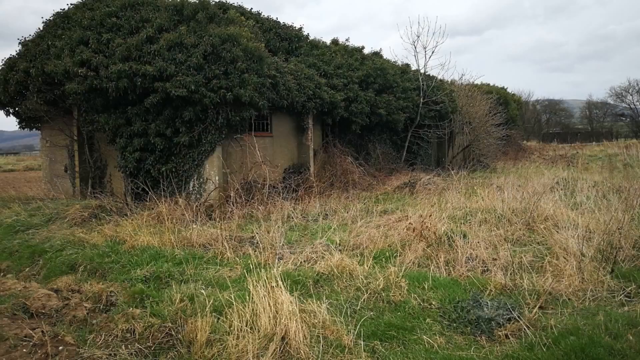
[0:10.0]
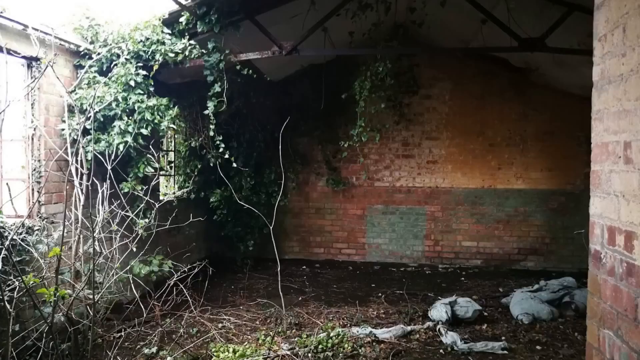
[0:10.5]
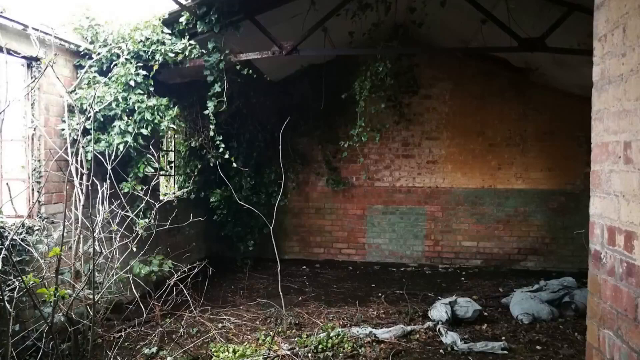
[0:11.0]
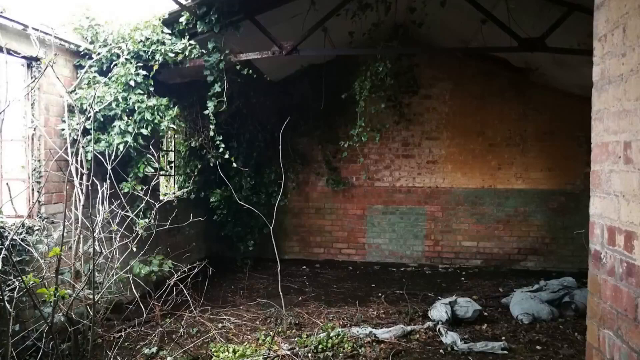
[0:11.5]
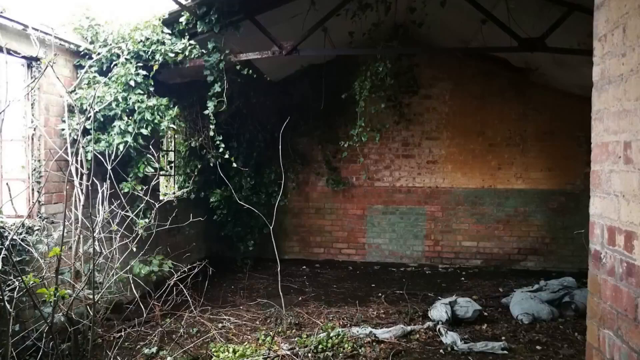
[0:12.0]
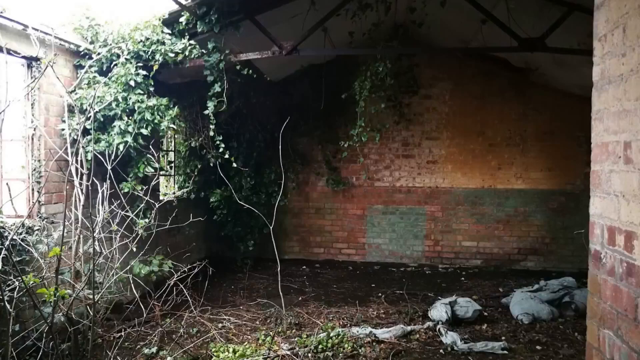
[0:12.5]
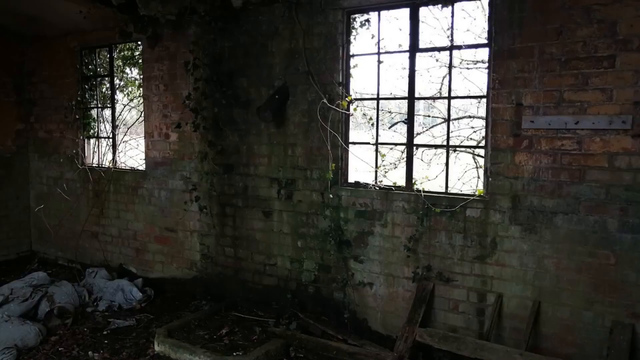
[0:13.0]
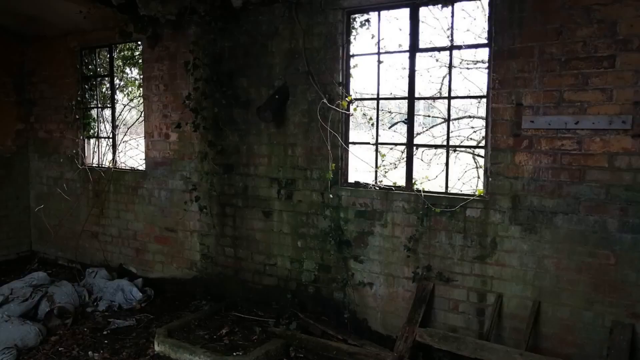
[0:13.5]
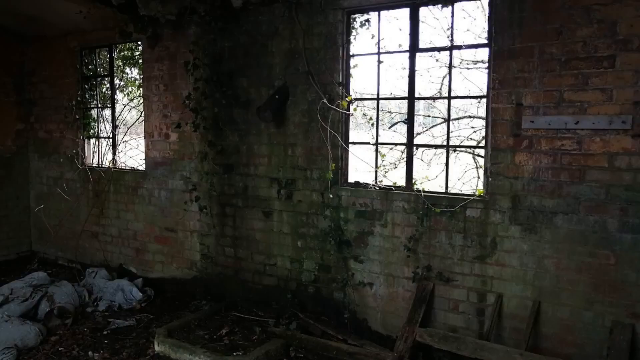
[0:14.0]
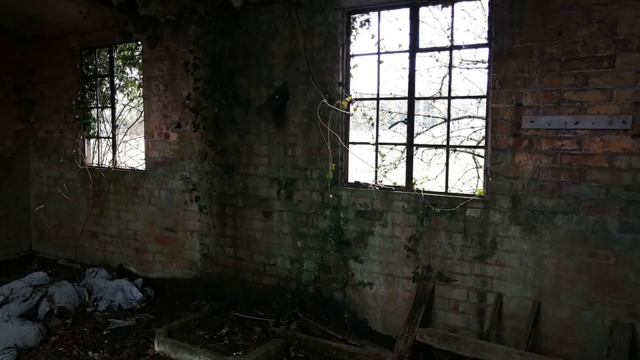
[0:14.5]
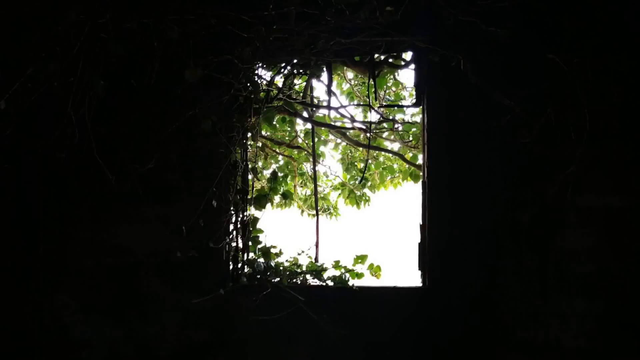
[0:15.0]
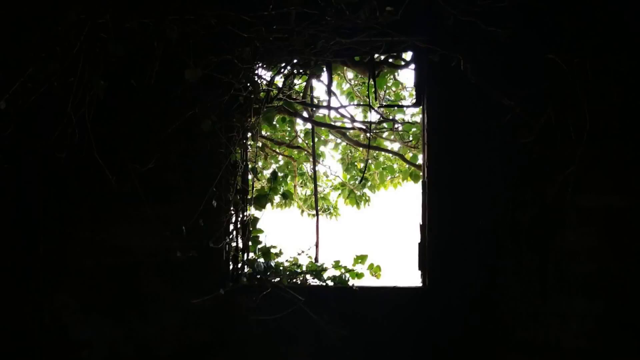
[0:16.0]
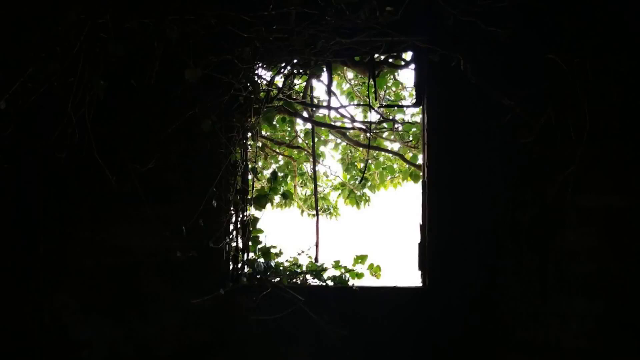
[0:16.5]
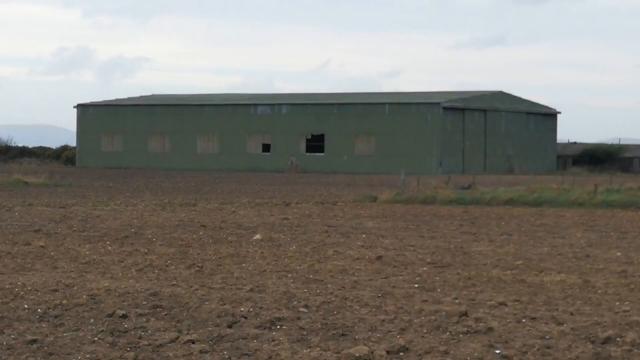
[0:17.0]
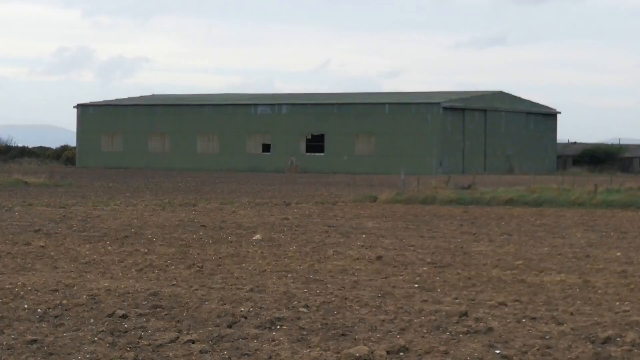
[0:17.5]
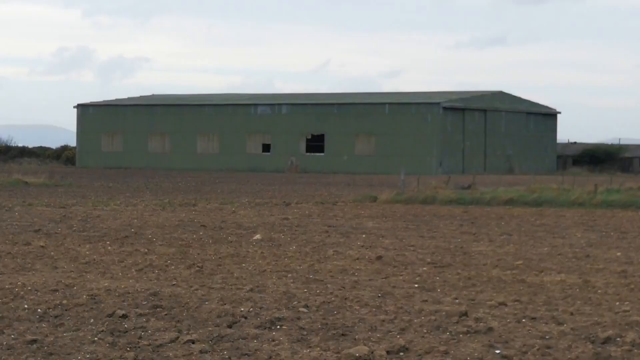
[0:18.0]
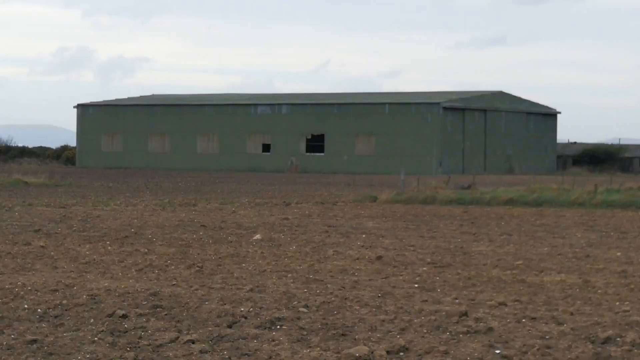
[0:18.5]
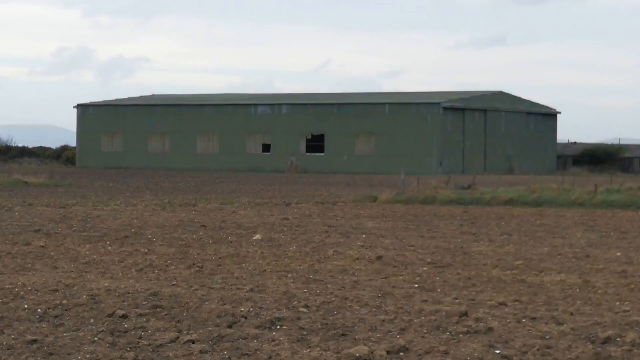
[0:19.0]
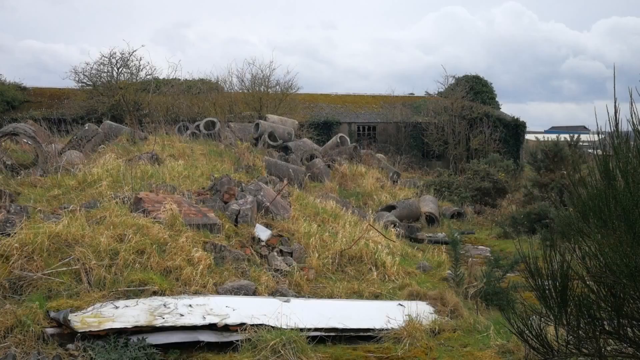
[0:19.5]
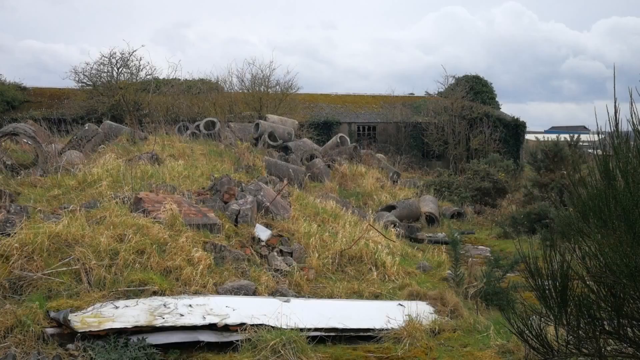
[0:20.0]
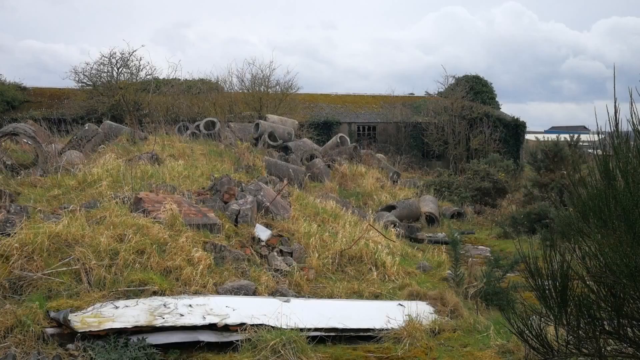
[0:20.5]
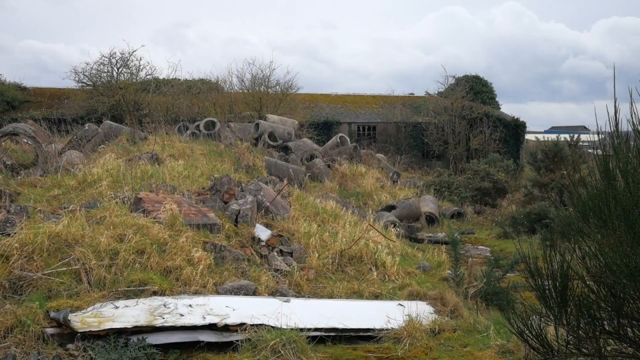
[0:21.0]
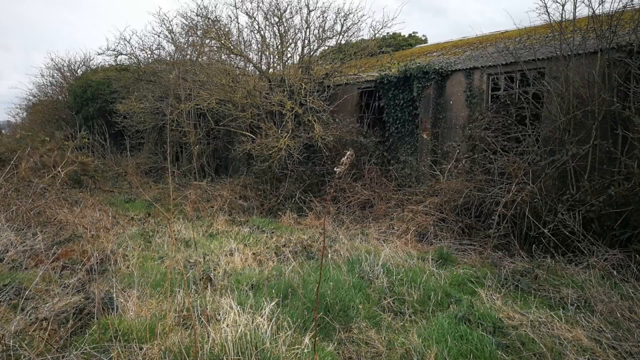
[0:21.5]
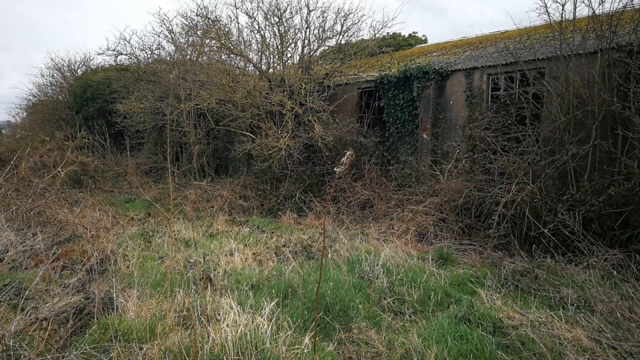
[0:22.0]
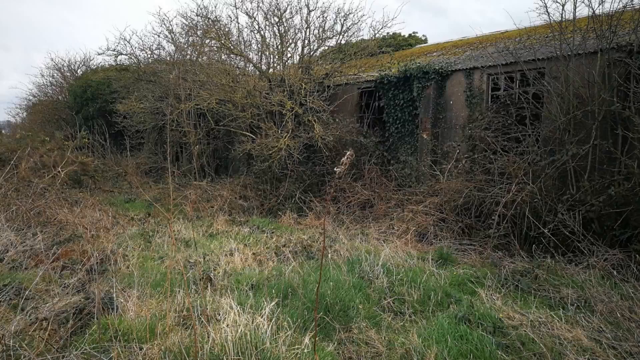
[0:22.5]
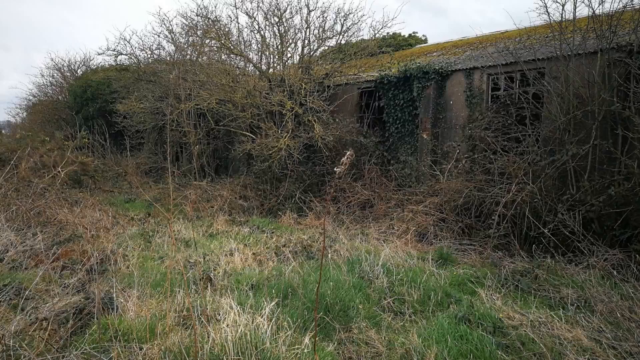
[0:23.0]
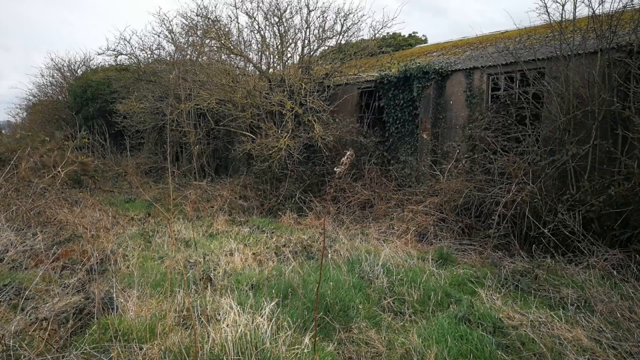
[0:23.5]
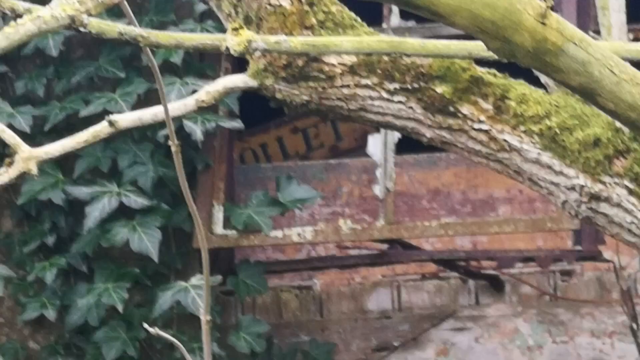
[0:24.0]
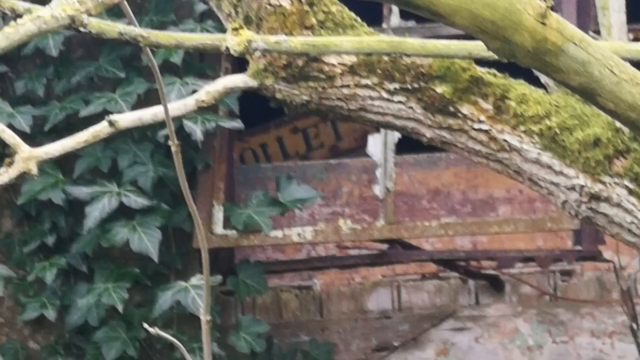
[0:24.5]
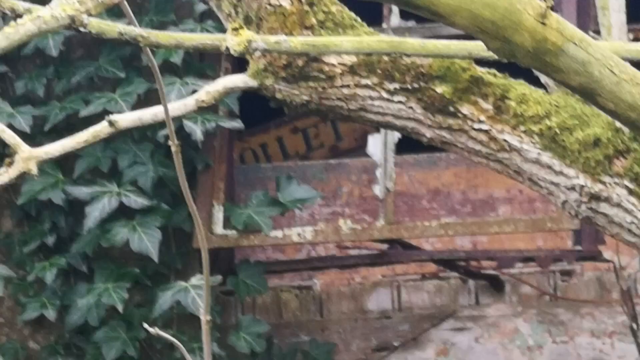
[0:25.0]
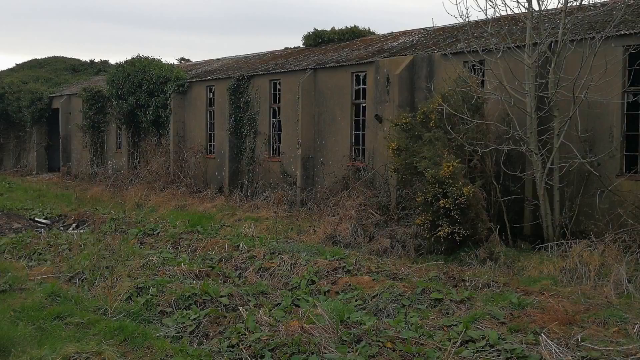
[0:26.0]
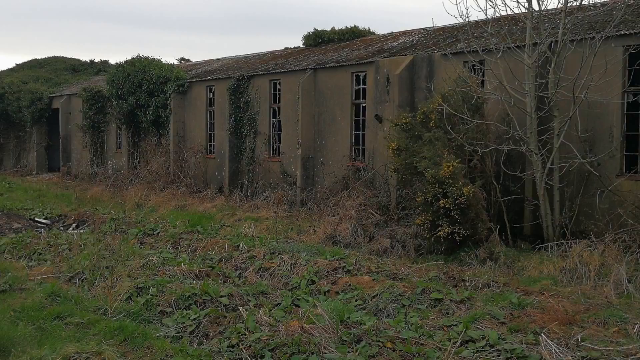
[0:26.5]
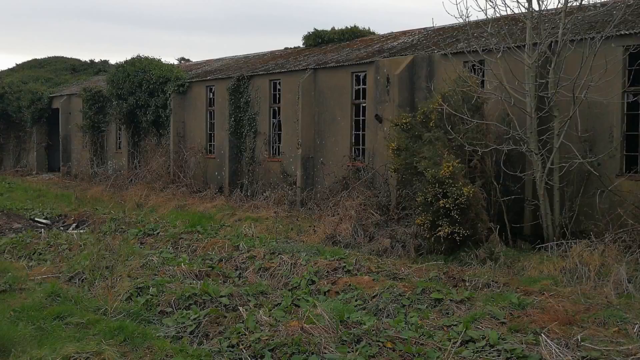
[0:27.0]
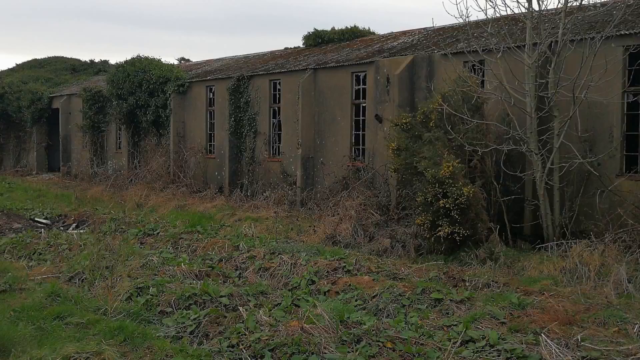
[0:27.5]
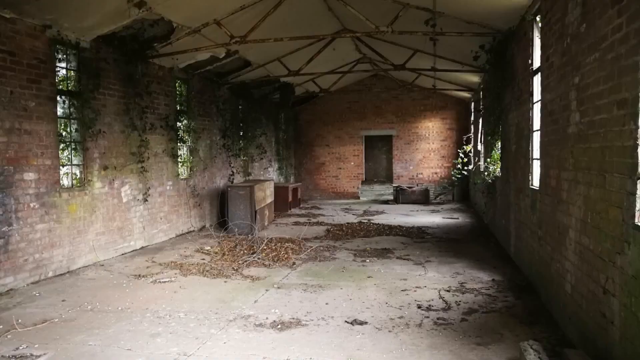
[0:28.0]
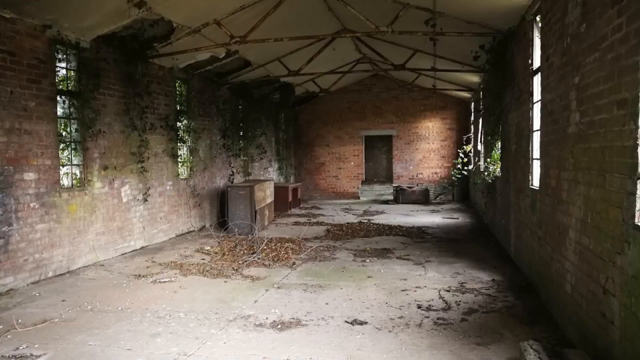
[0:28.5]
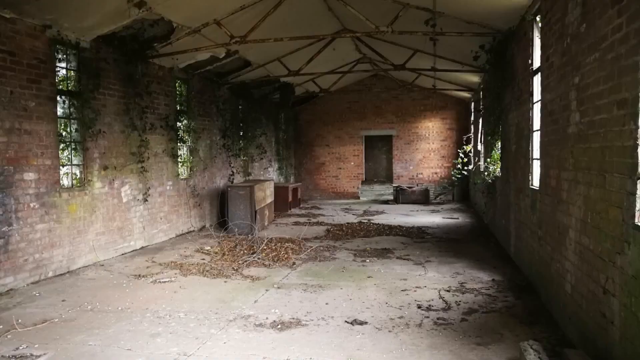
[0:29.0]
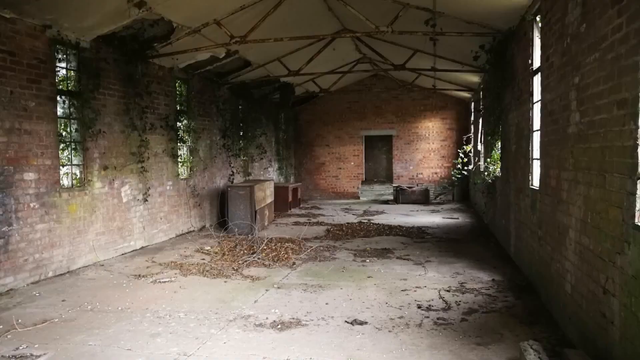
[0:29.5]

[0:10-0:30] The scene is inside an abandoned structure with nothing but red brick. A thicket is growing inside around the wall that has windows, and the windows are smashed out. The steel frame of the ceiling is visible. The brick walls are weathered as if rain has gotten inside and dripped down them, wearing them. They are also discolored: in some places the red brick appears to have mold on it, and in other places it is blanched out to gray. All the window panes are broken out, and at one window even the frame is gone, giving a straight view out to the branches of a tree and daylight. The video then moves outside to a large pale green structure with six windows, two of which have been broken out. Multiple sides of the structure are shown, and it is overgrown by the surrounding vegetation.